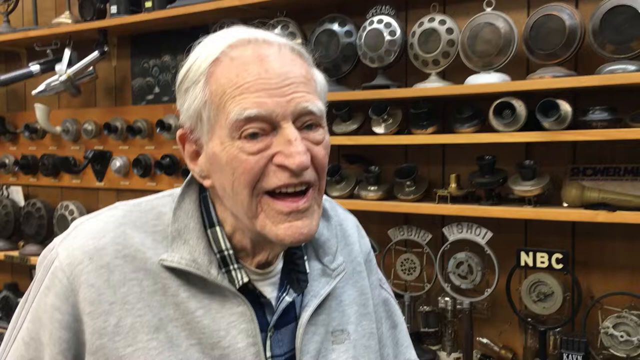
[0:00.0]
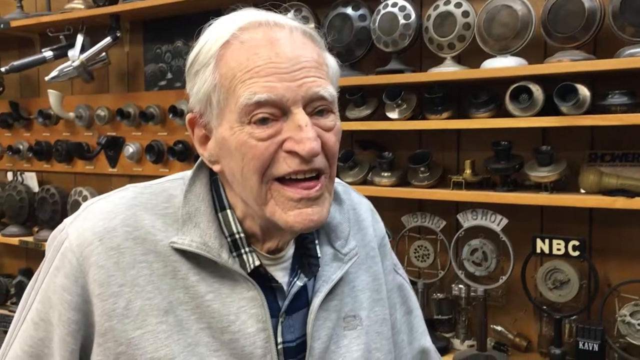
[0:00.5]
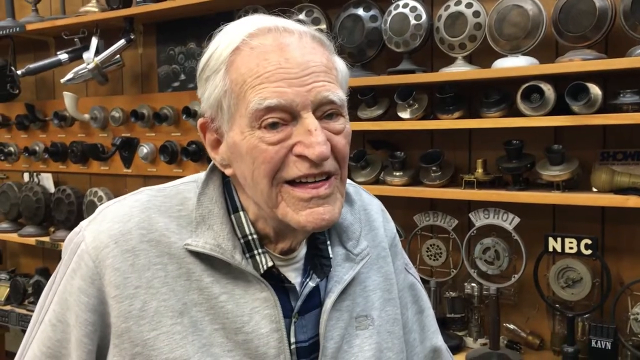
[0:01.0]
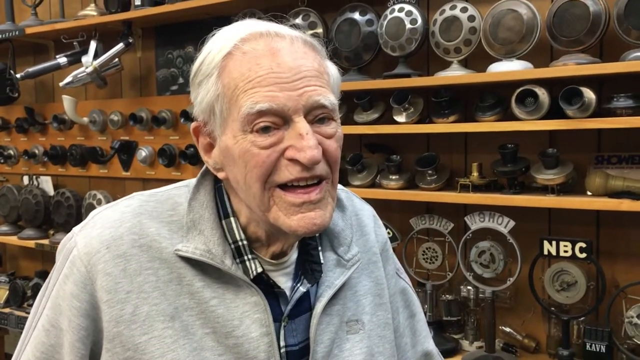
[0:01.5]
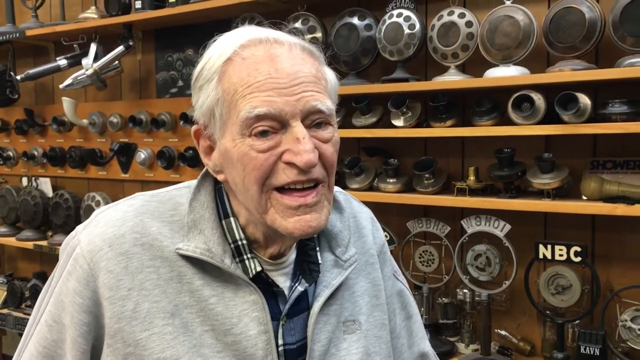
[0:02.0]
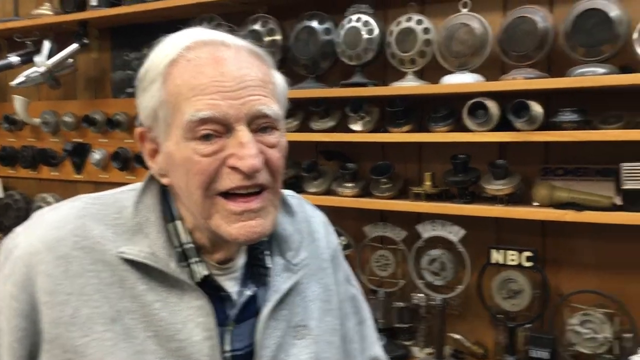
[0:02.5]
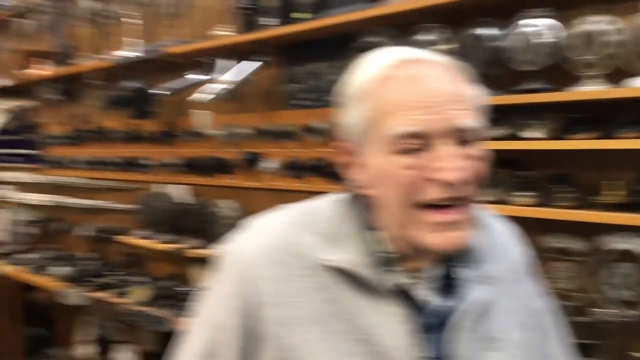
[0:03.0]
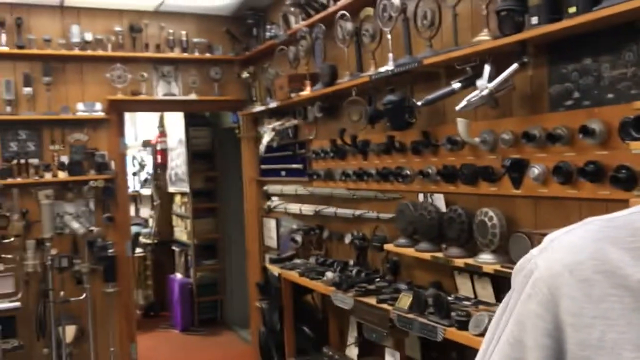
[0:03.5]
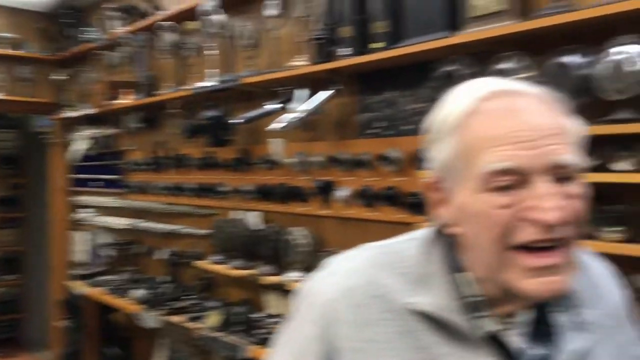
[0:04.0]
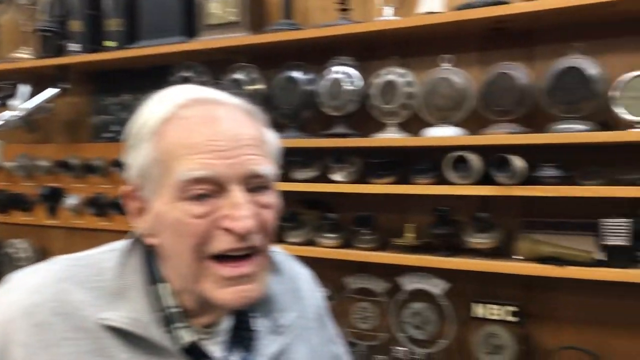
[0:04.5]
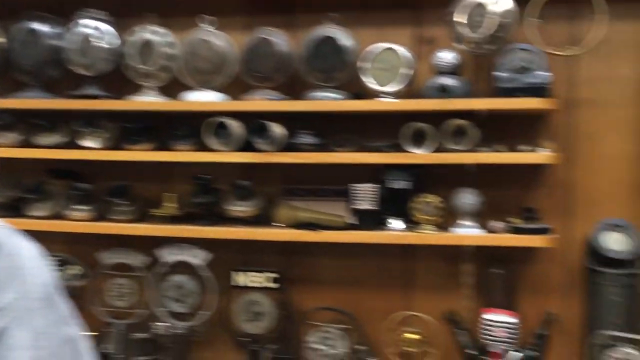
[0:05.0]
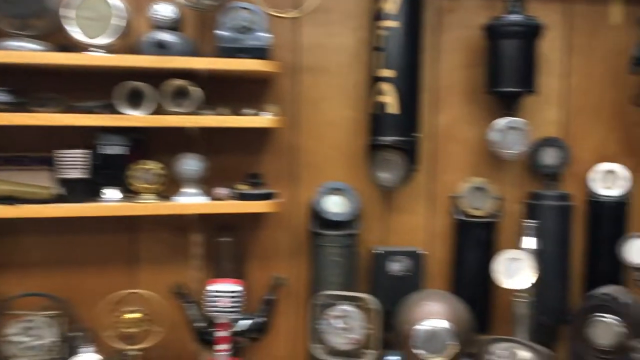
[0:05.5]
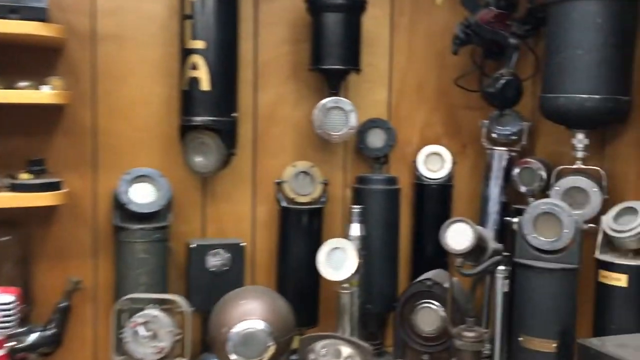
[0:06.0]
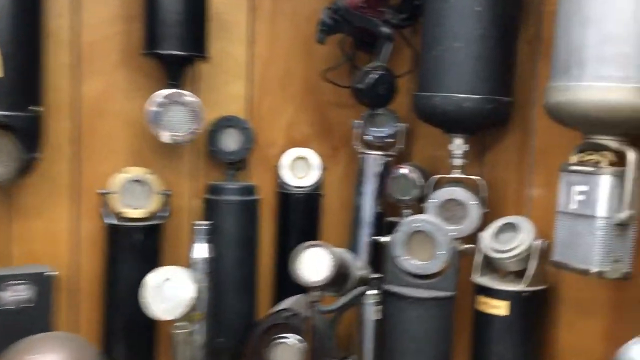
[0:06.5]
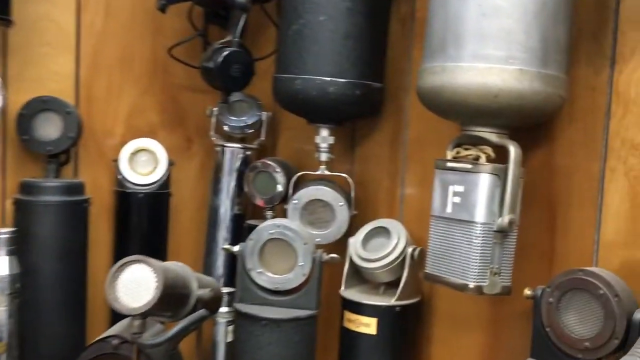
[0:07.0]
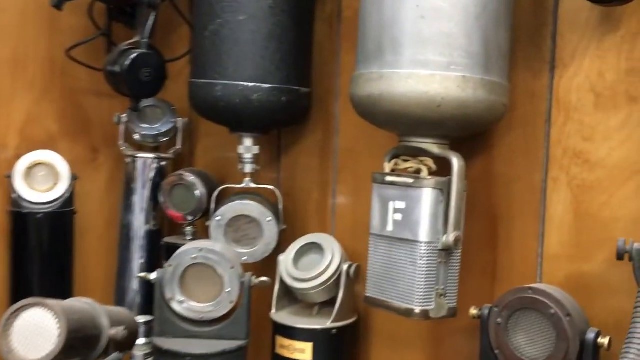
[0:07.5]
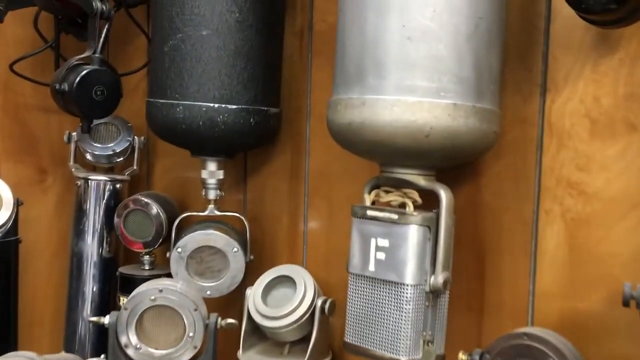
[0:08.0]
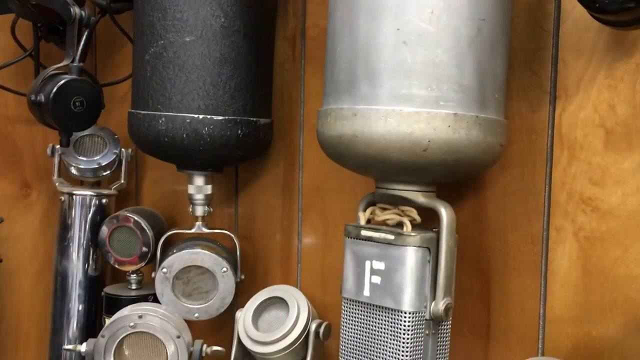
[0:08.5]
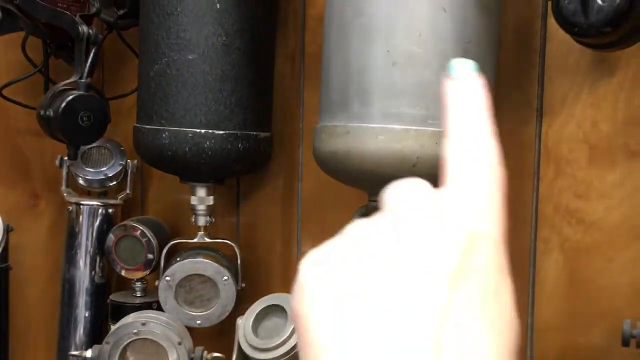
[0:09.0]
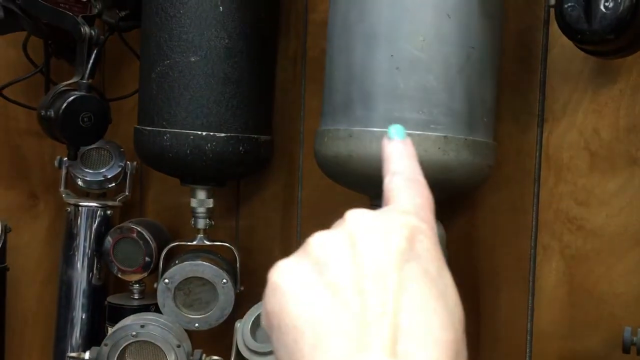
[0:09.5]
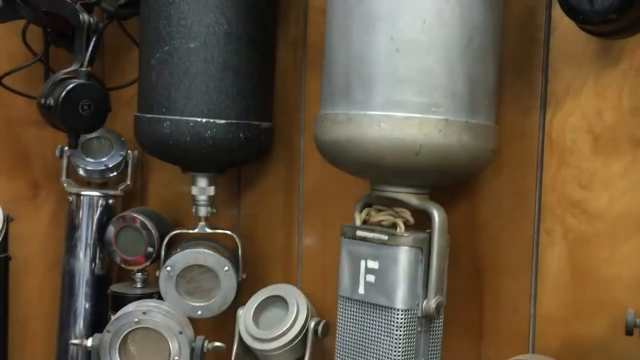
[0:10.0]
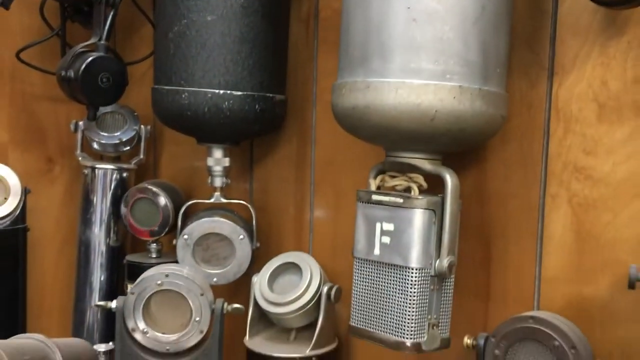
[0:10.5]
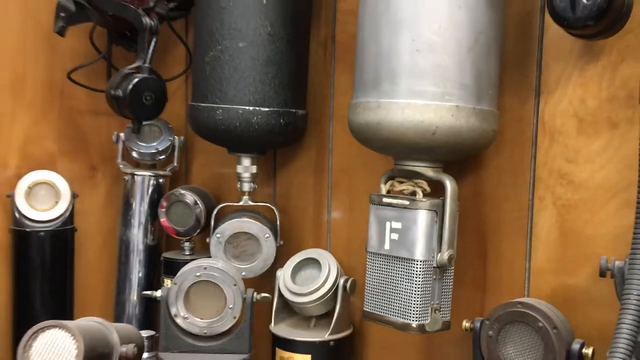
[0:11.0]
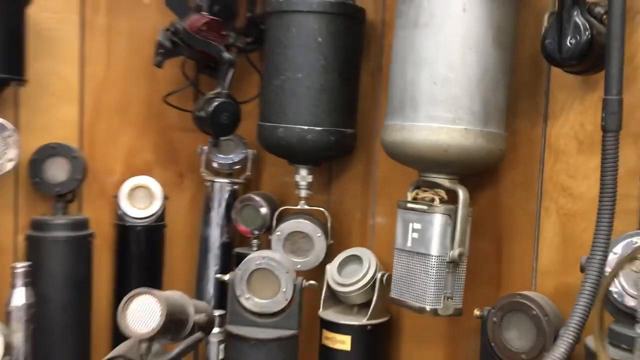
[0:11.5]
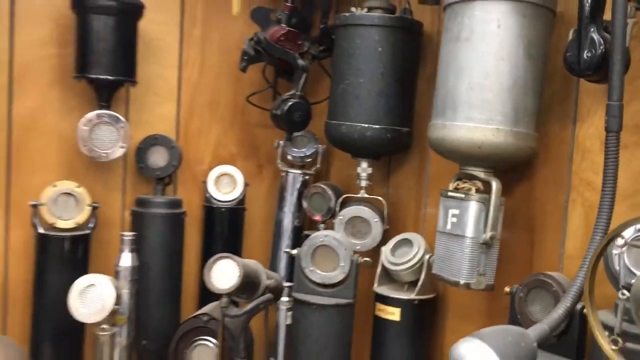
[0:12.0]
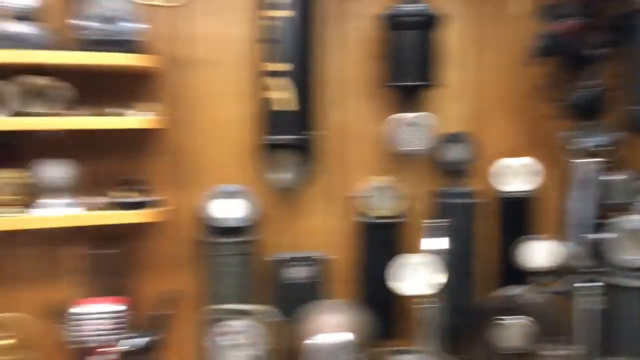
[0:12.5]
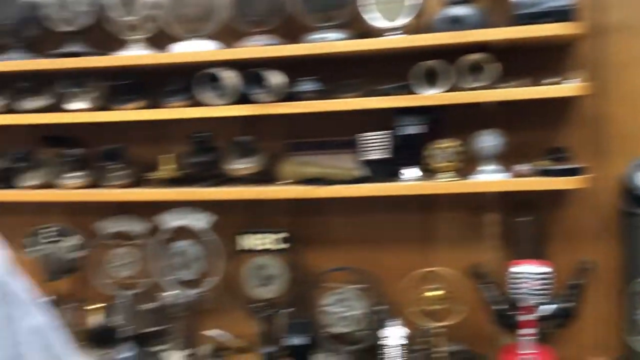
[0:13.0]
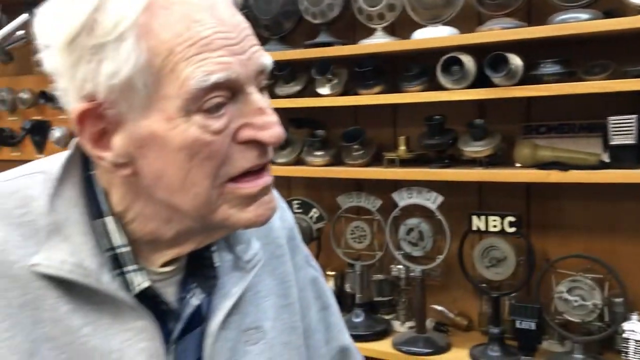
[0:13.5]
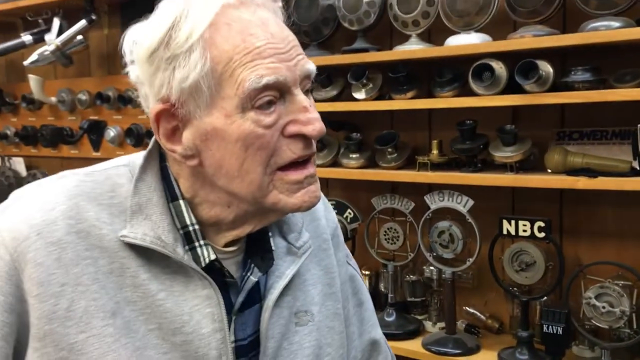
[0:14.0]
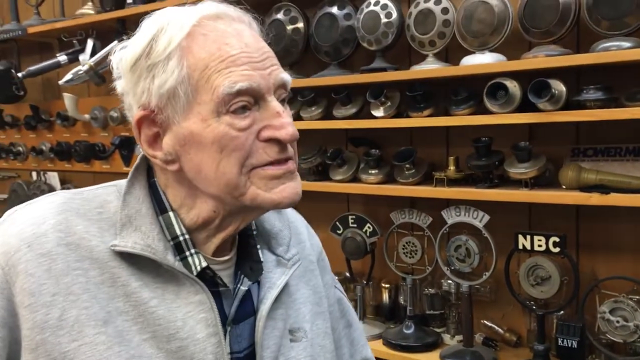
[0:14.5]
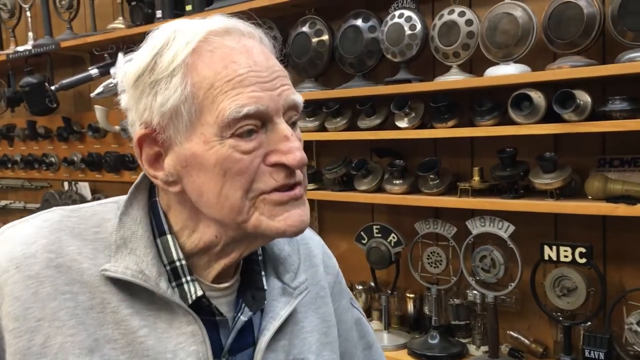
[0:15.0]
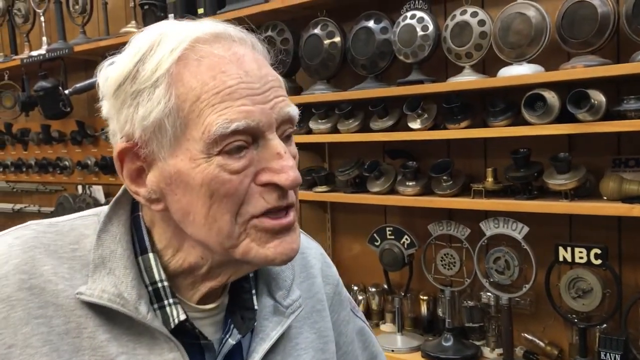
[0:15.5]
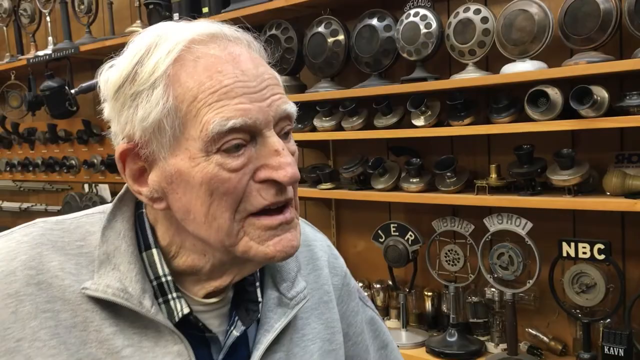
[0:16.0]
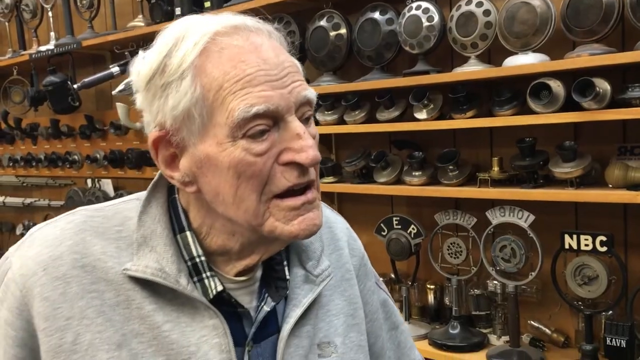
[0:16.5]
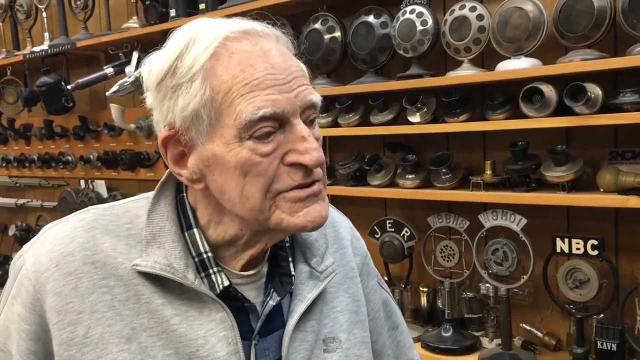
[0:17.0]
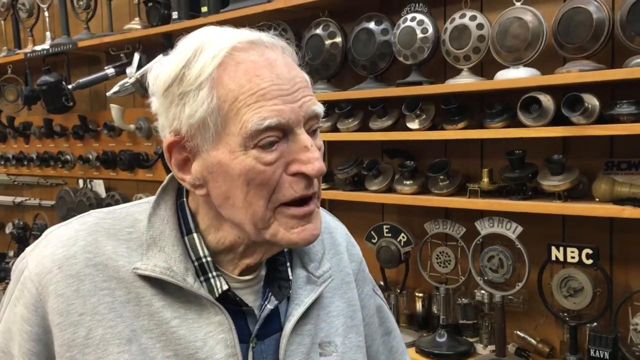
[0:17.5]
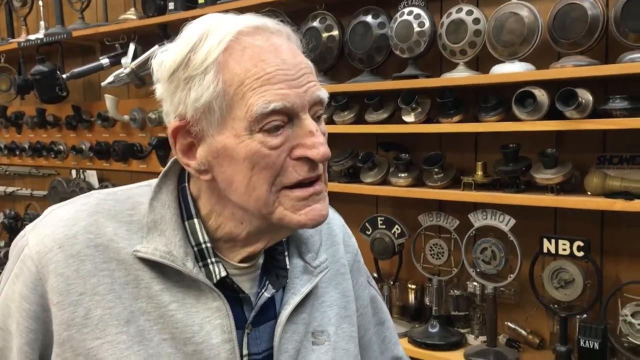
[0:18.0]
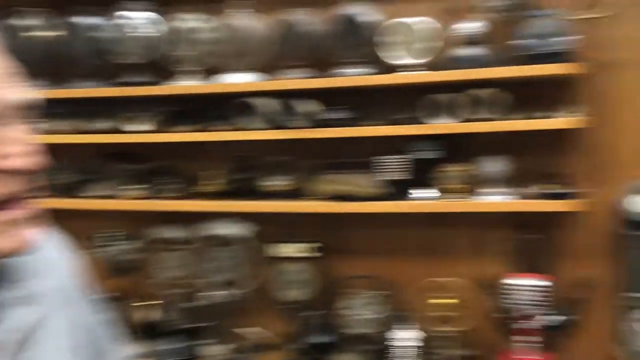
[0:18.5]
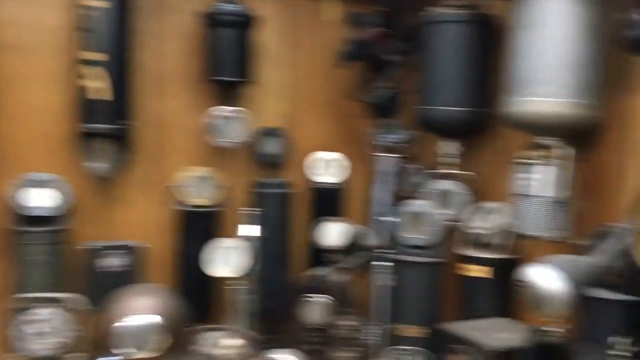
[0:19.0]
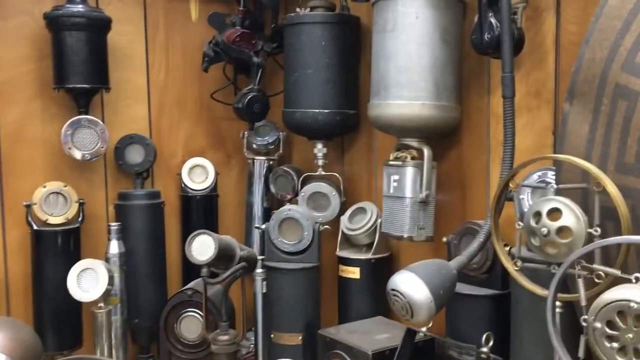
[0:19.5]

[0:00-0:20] An old Caucasian man with white hair and many wrinkles on his forehead smiles as he looks toward the right of the screen. Behind him are lots of circular items, kind of like bottle caps or something. The camera pans across the shelves, which hold canisters of different types; one has the company name "NBC" on it. The man wears a plaid shirt covered by a gray sweatshirt that zips up the front and has no hood. The background is shelves and shelves of these round, circular items. He has bags under his eyes along with his wrinkles. As the camera zooms in, a woman's hand with painted tealish blue fingernails points at what looks like a canister.